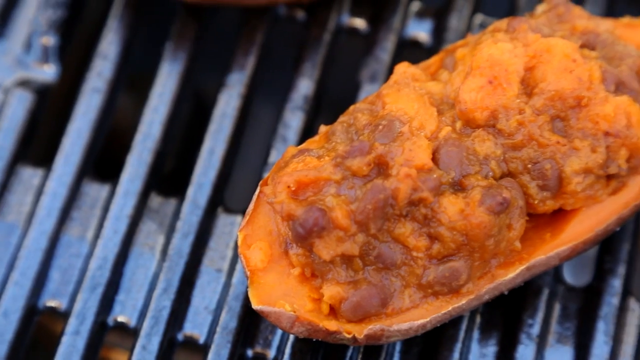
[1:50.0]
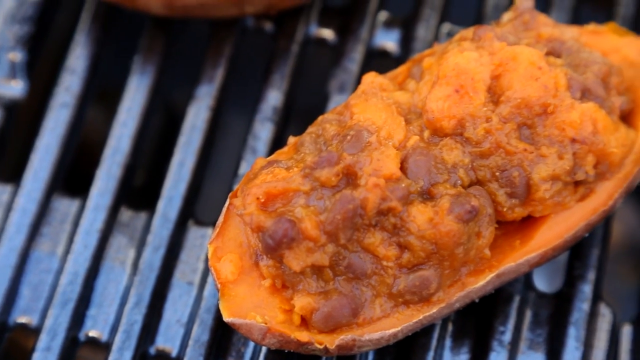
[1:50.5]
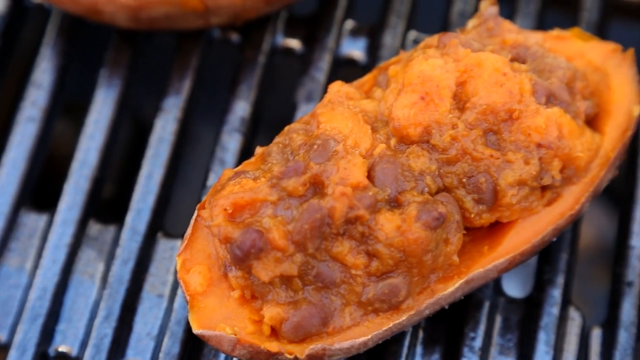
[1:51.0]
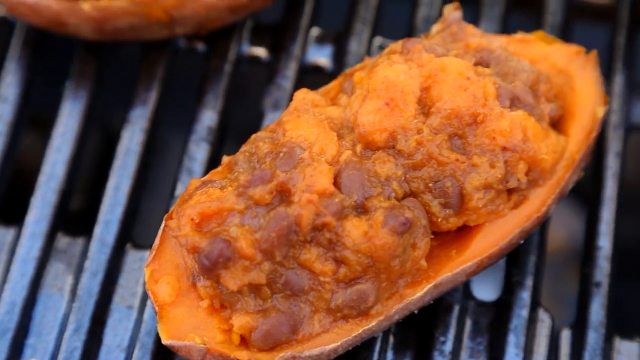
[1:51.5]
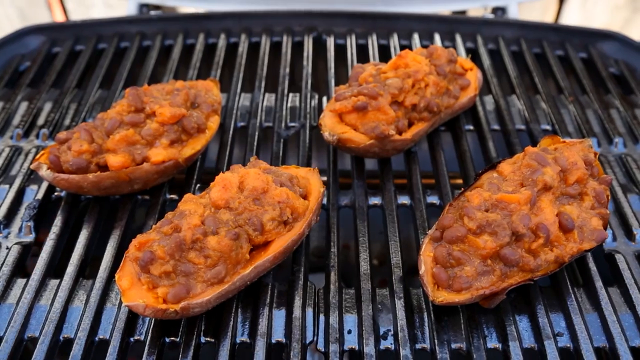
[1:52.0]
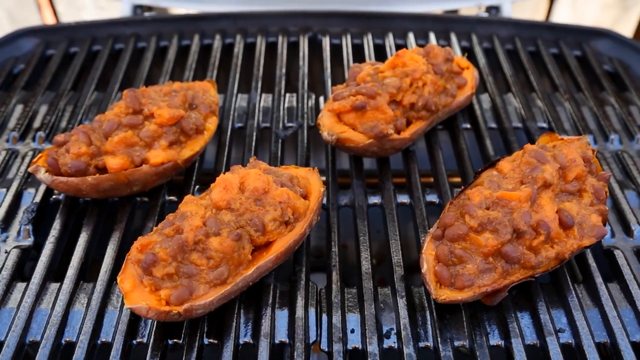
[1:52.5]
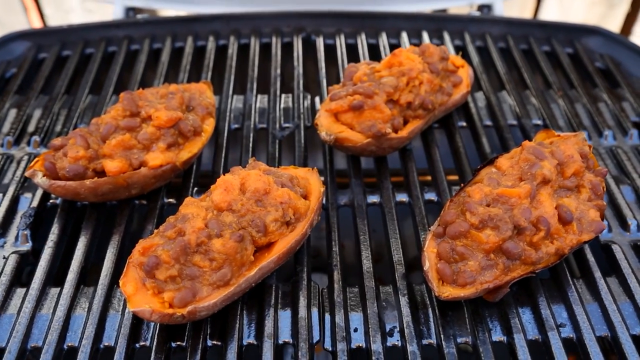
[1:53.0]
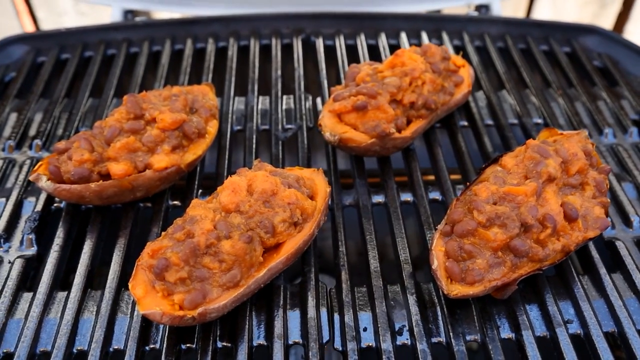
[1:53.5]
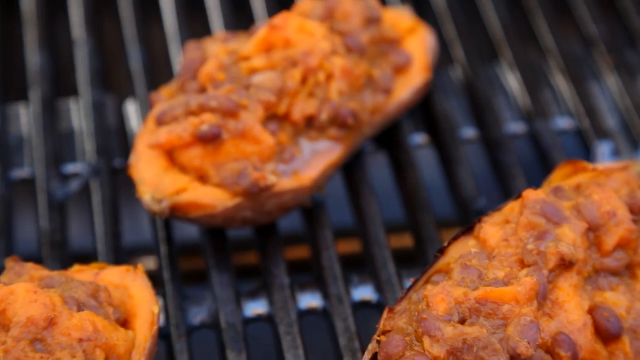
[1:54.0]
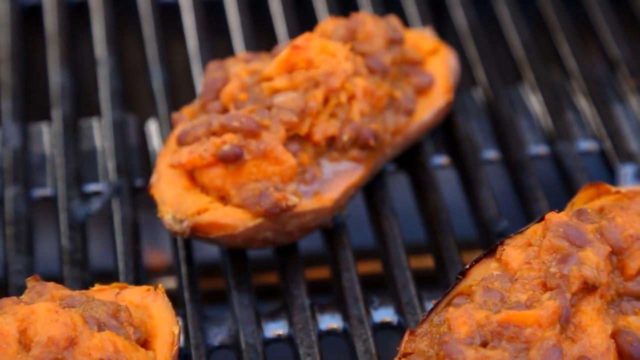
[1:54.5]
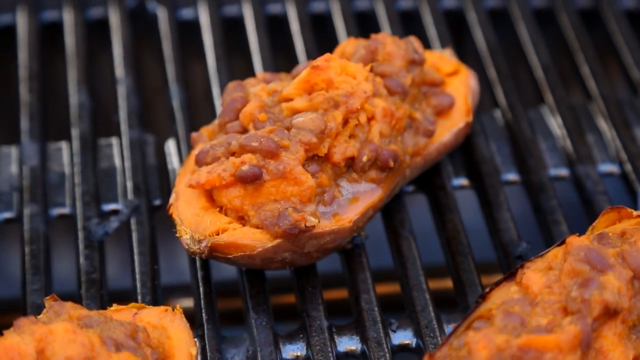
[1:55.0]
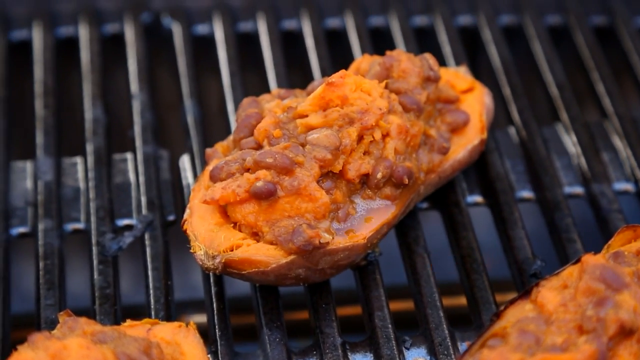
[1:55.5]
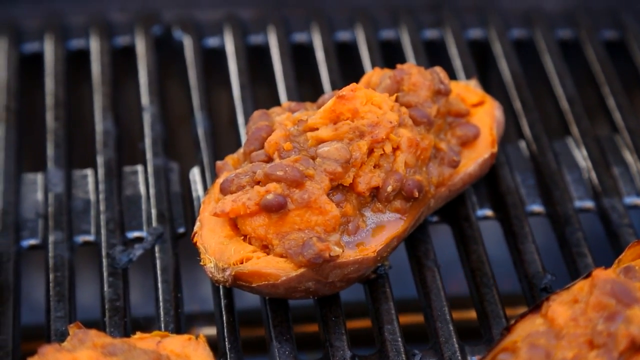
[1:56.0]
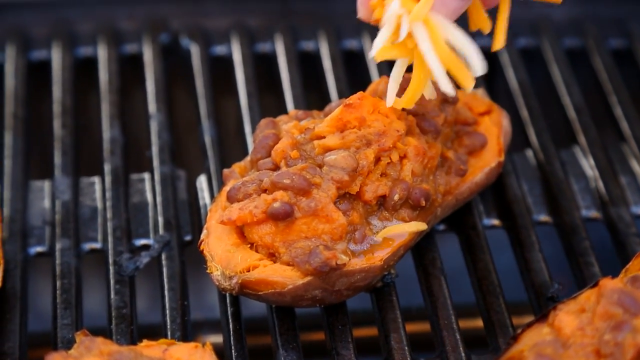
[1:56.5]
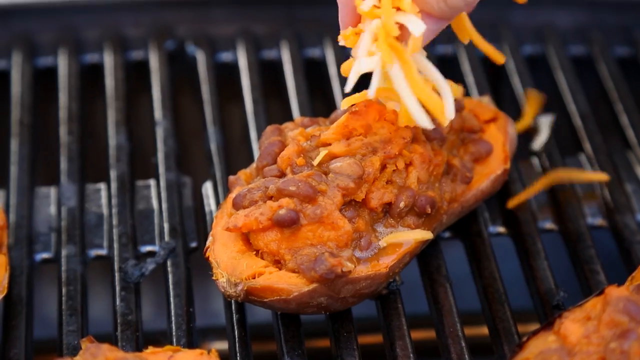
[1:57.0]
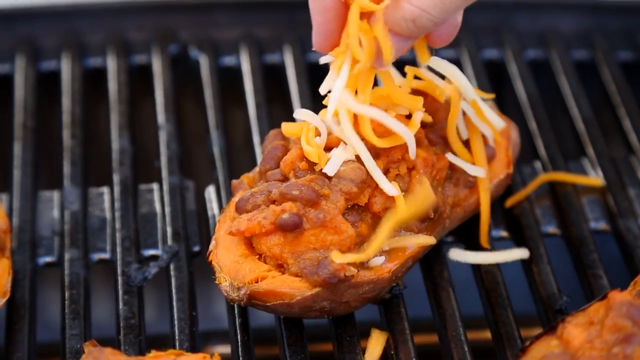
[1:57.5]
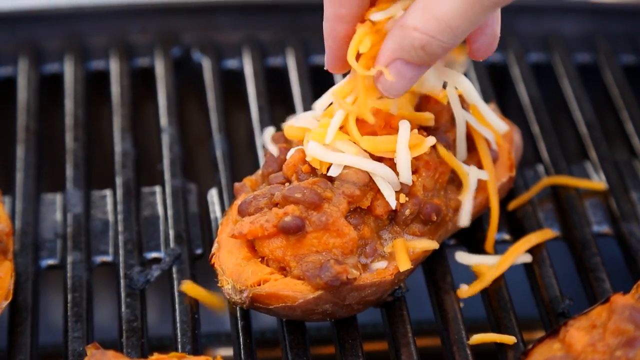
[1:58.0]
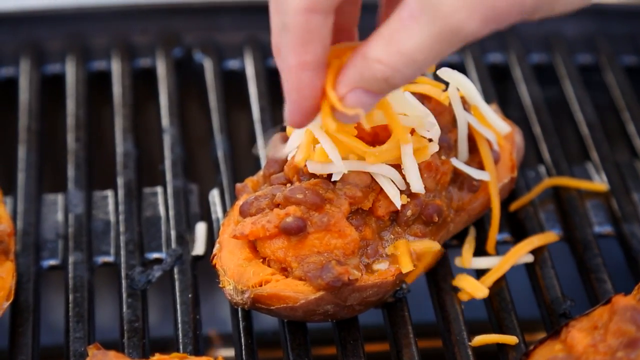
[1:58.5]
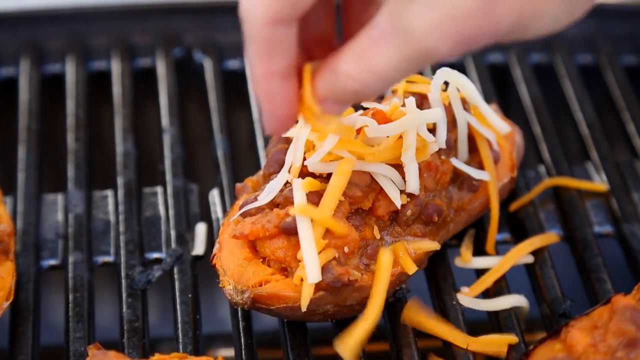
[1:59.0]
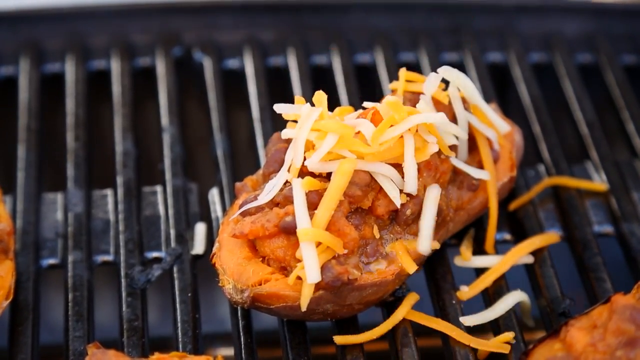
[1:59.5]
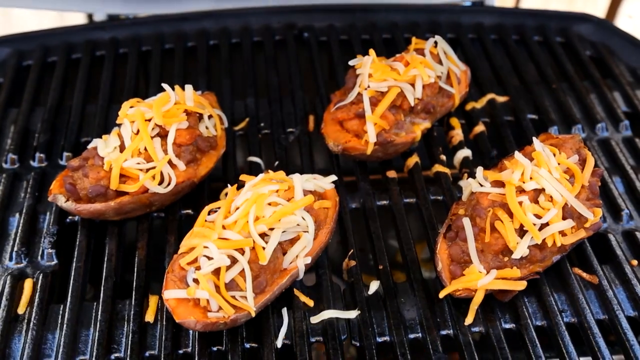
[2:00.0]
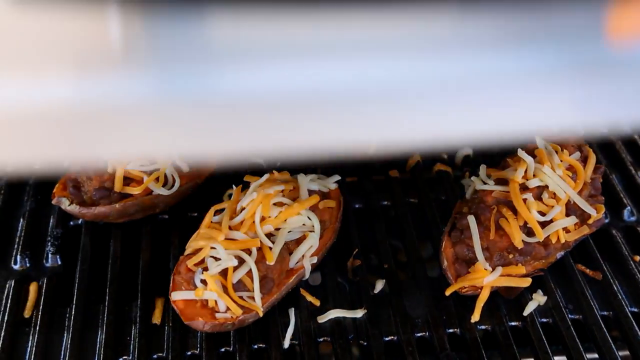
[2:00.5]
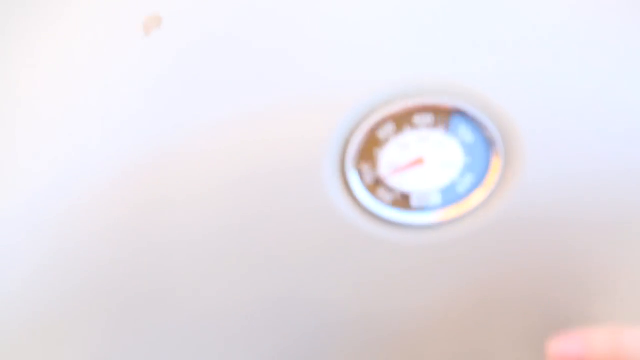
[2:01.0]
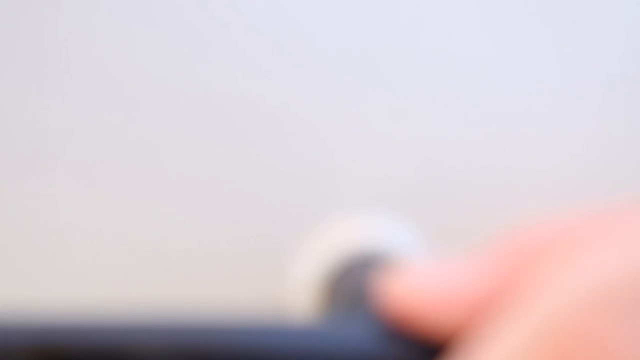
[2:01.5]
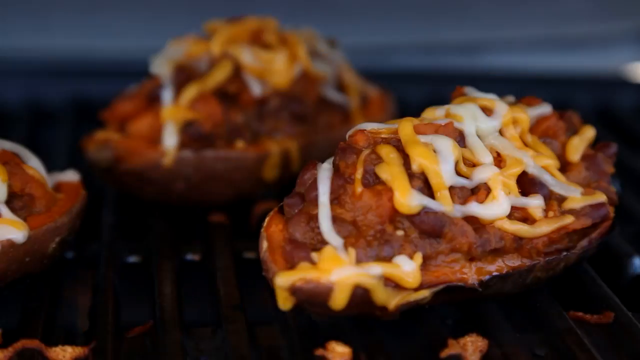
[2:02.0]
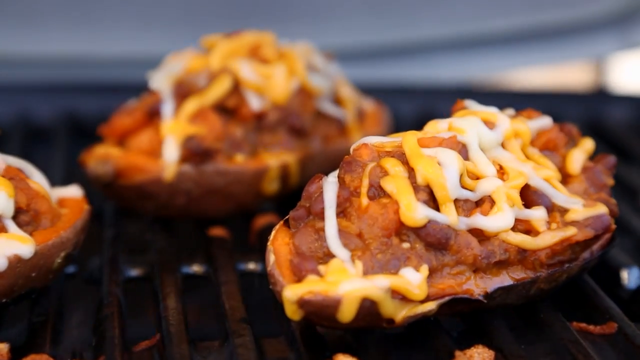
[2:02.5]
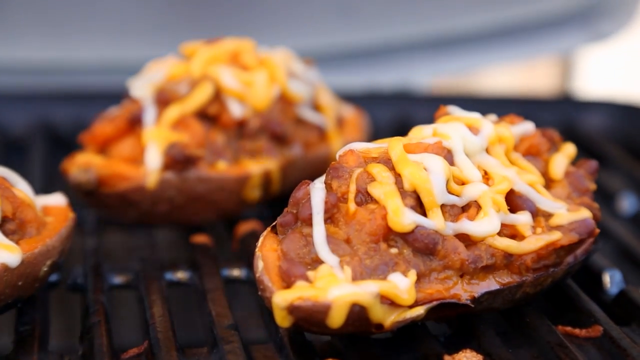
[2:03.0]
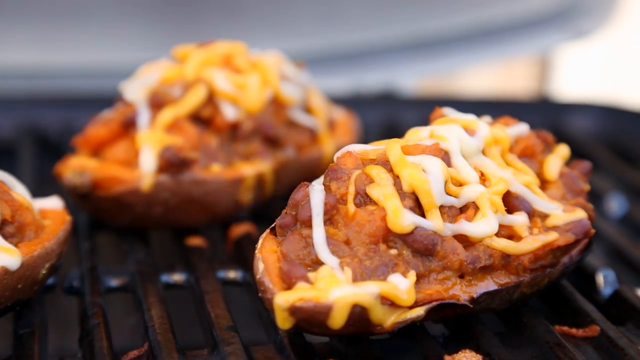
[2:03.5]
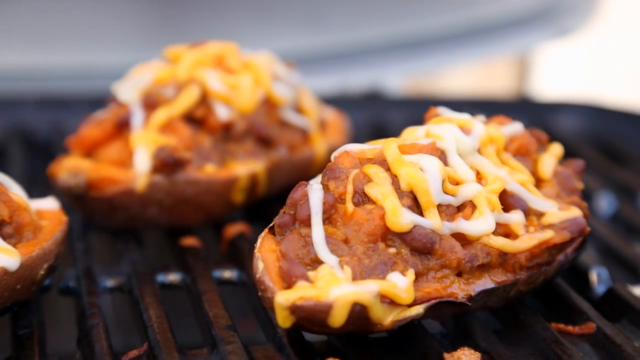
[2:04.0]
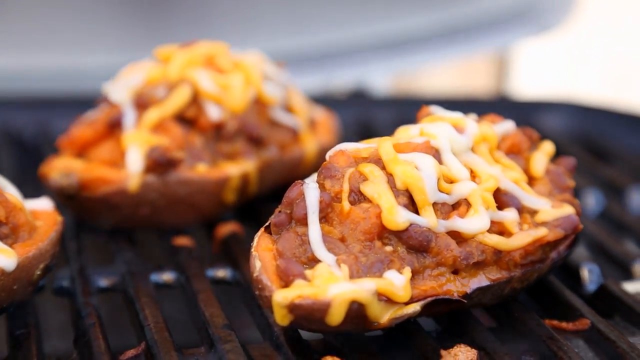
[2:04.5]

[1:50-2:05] A close-up shows a grill with one single sweet potato shell filled with the mixed orange sweet potato and brown beans. The camera moves from left to right to an overall shot of a round grill with four filled sweet potato shells. Fire is now on under the grill, and it appears to be cooking the outer shells. The woman appears to grab some yellow and white cheese that appears to be thin, like shredded cheese, and sprinkles it on top of one sweet potato. Then all four sweet potatoes are shown covered with shredded cheese, and she appears to close the lid of the grill. When it opens, some parts such as the cheese are melted and more drippy, and smoke comes from the grill. Then a plate with four sweet potatoes is shown, with her using a spoon to put some sort of white cream on top of them.